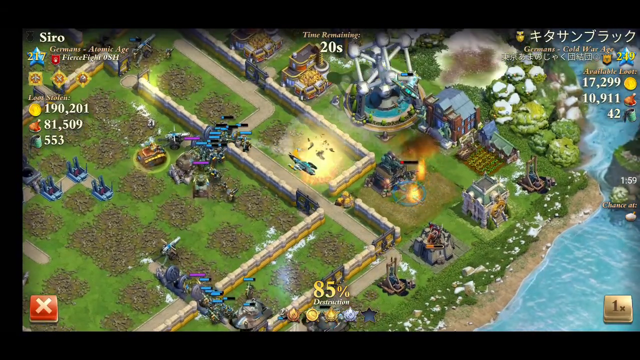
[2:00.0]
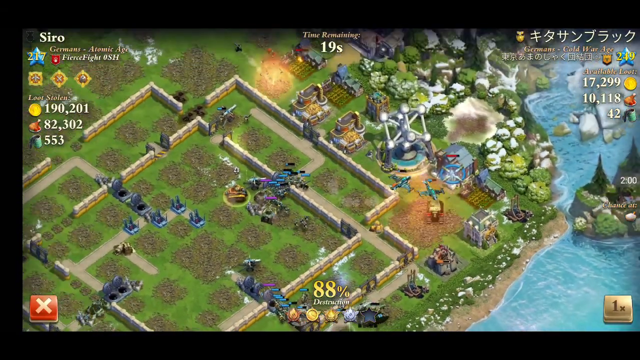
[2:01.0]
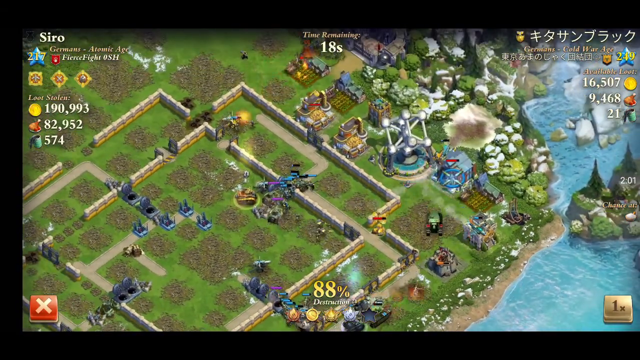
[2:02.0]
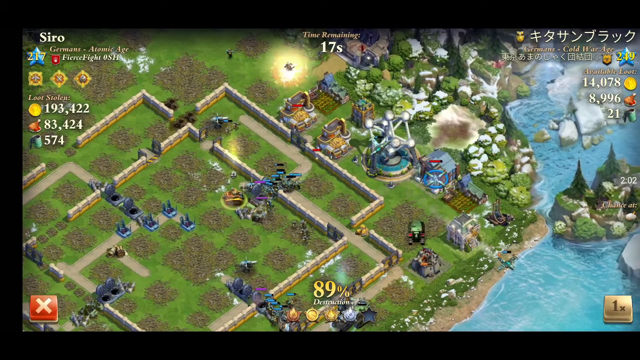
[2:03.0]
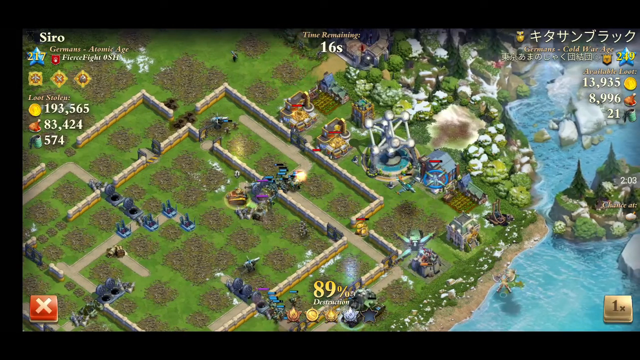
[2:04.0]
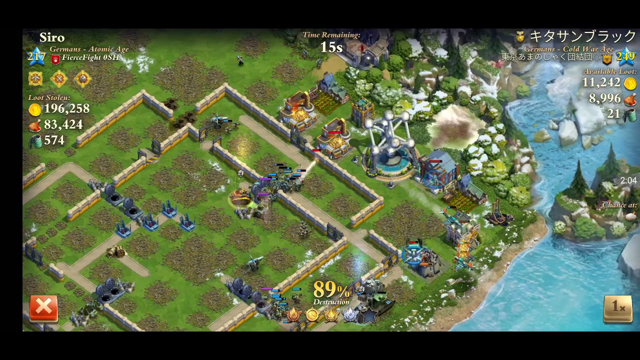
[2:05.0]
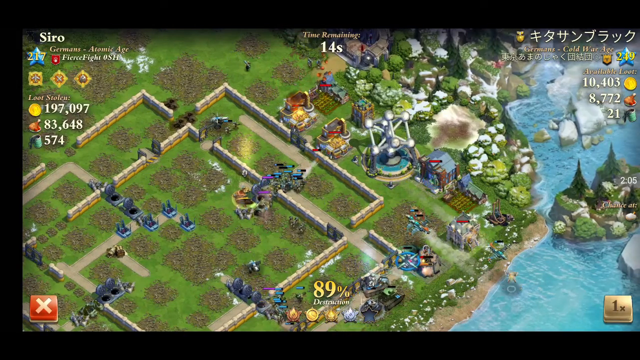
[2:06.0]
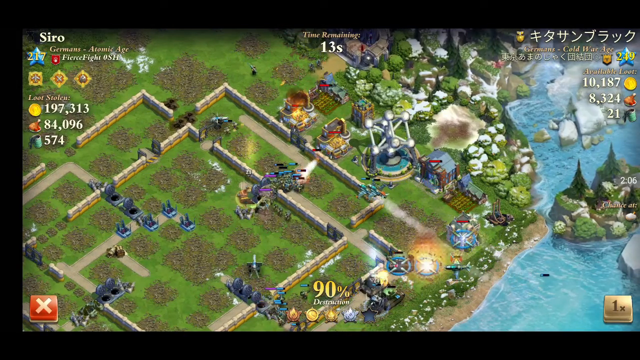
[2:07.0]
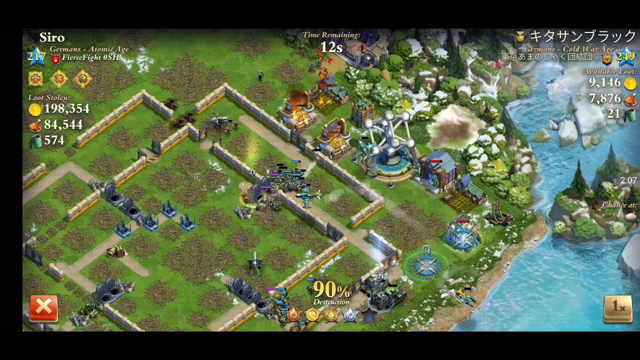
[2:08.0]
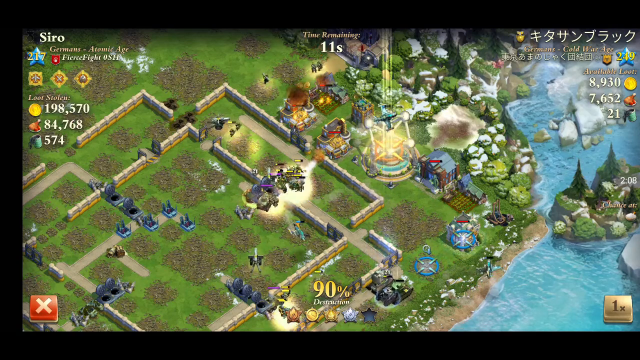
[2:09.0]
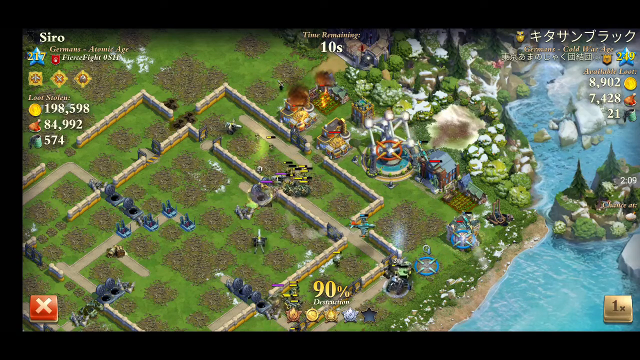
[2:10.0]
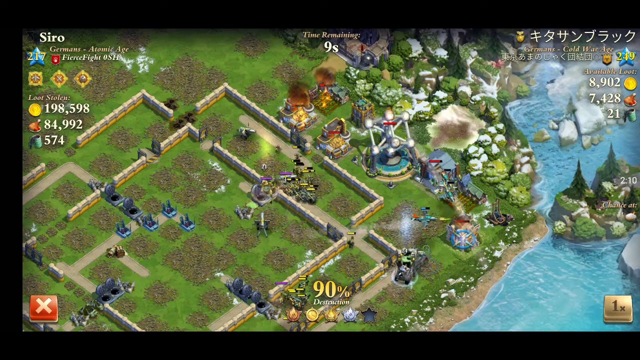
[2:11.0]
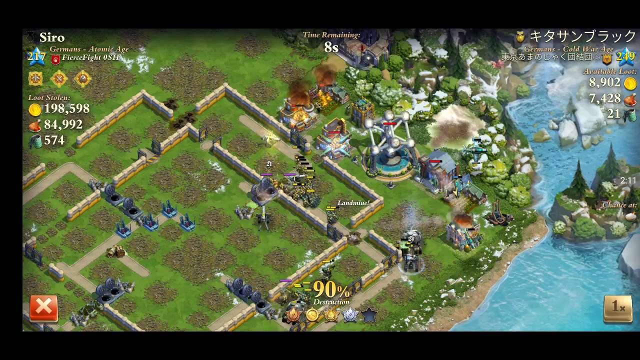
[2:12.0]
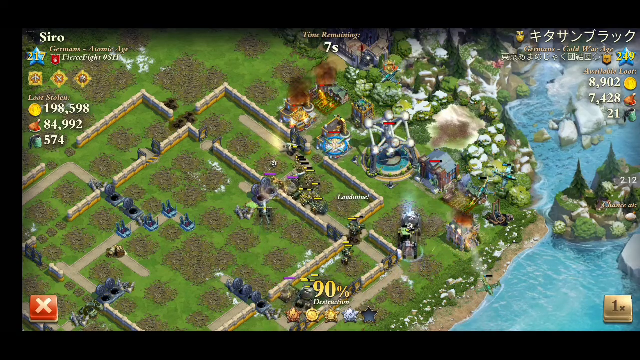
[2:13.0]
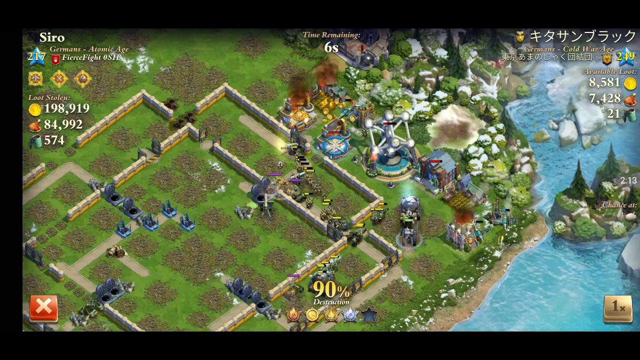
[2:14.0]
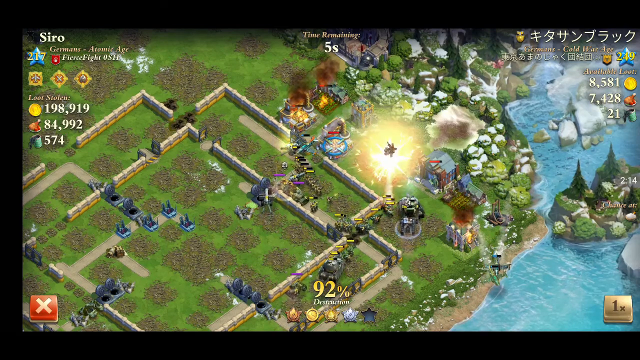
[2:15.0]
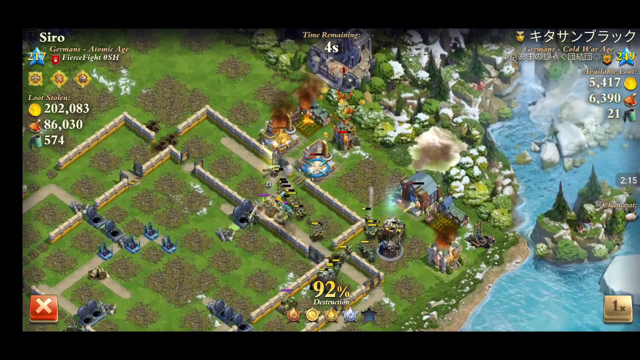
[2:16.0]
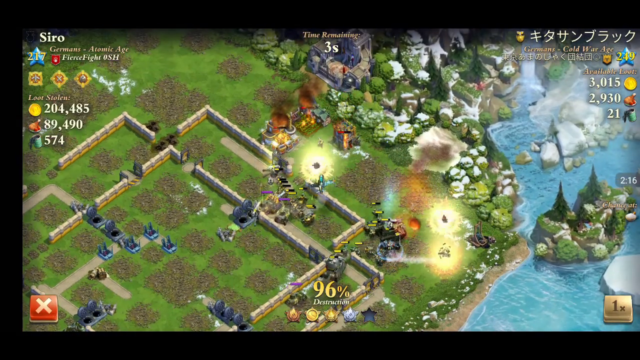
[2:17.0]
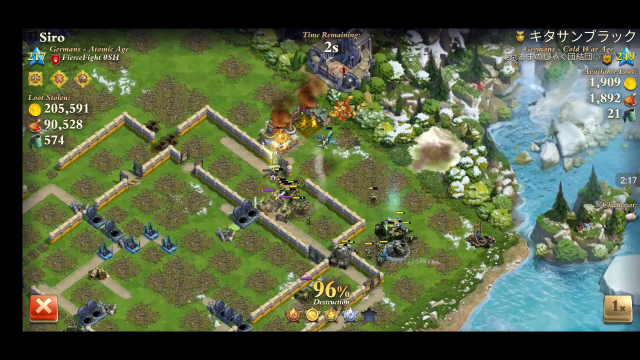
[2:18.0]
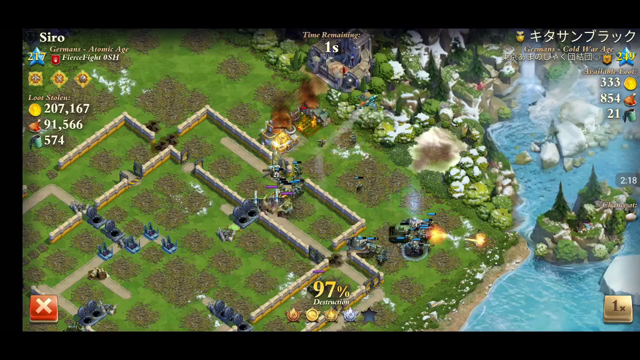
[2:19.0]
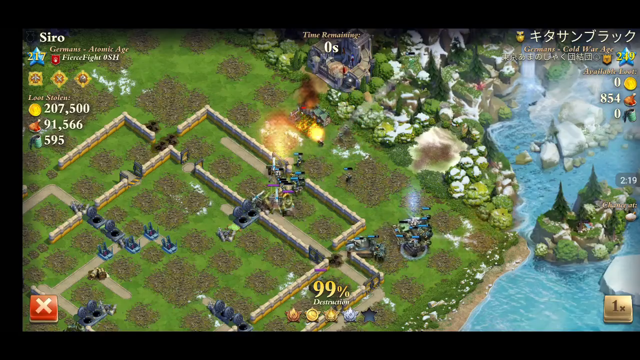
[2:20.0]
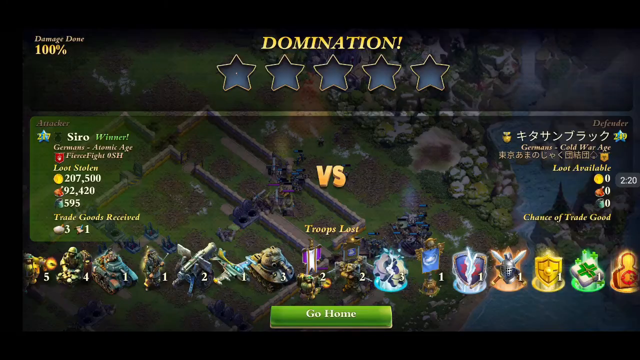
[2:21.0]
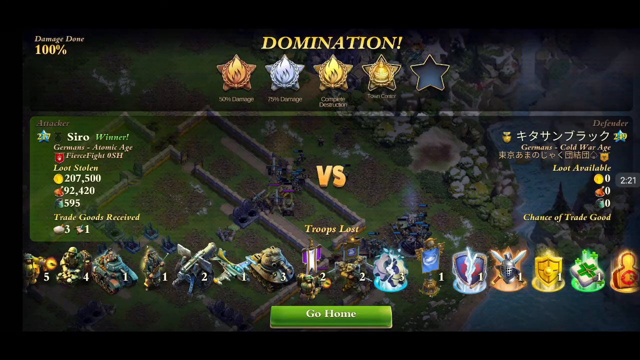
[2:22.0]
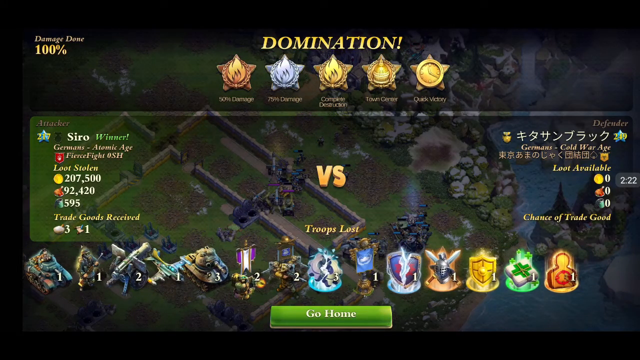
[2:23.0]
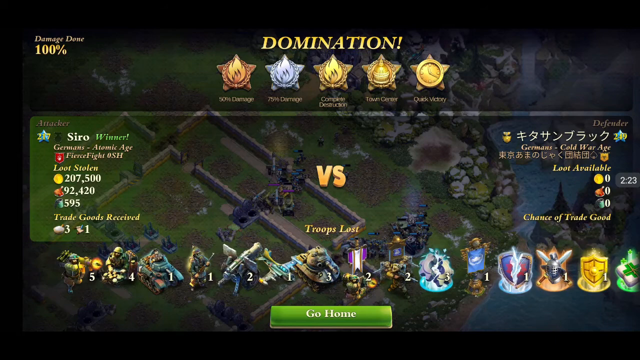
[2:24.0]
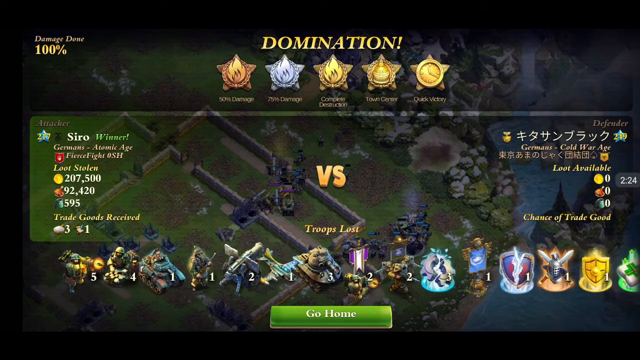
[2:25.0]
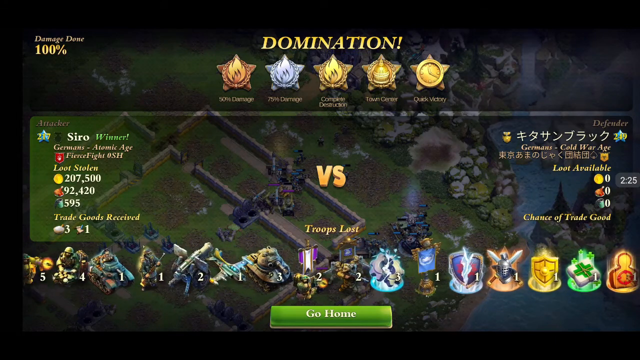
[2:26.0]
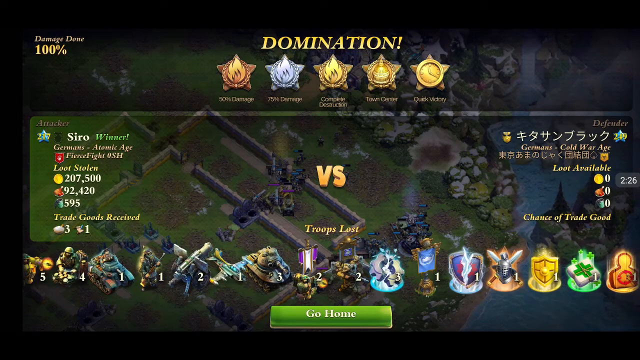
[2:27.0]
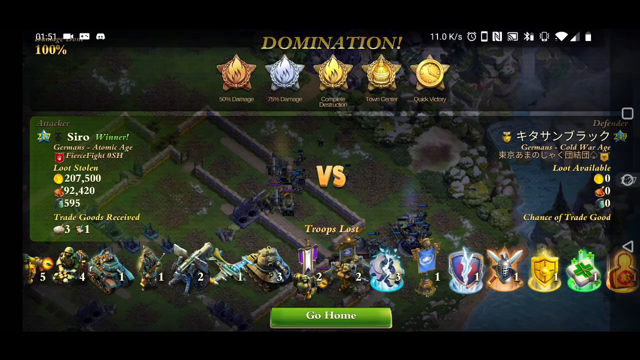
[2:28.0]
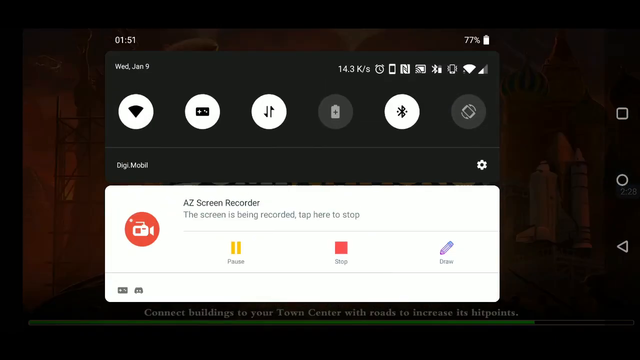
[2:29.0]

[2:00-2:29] The attacking player cleans up what is left on the map, which is some farmlands and maybe a couple of defense towers. The defending player is completely destroyed, with 100% destruction. A post-game summary shows that every available accolade was earned: 50% damage, 75% damage, complete destruction, the town center and a quick victory. It also shows 100% damage and that nearly everything available was stolen from the defending player. The attacker lost some troops, but apparently not many overall.